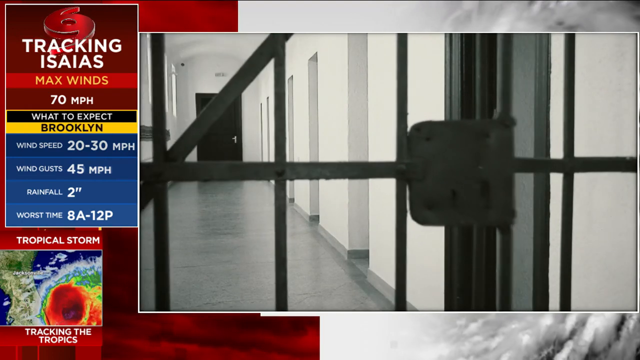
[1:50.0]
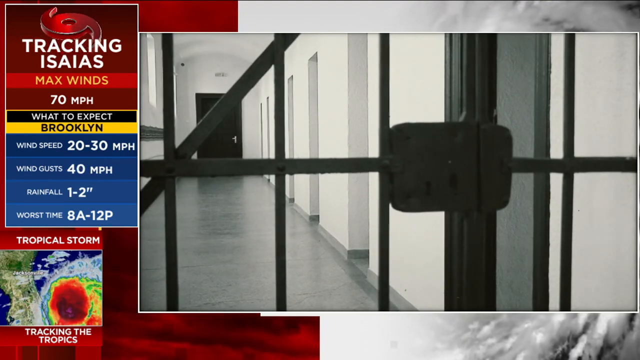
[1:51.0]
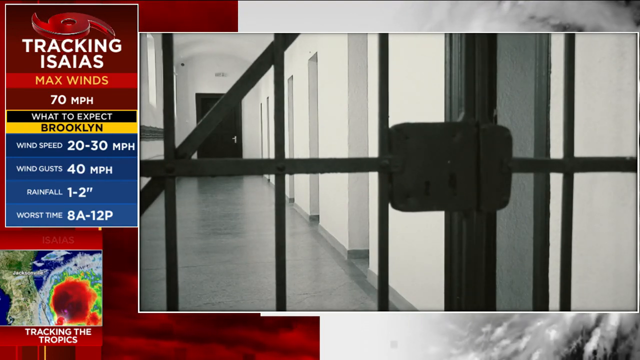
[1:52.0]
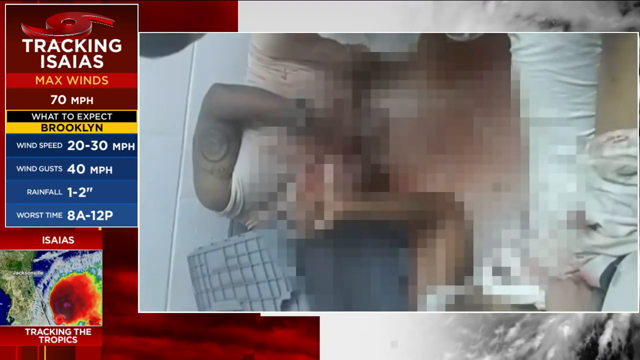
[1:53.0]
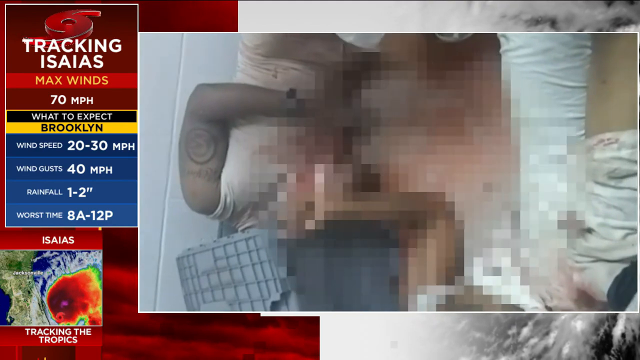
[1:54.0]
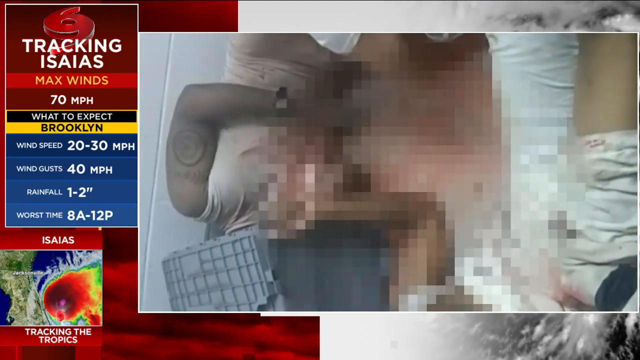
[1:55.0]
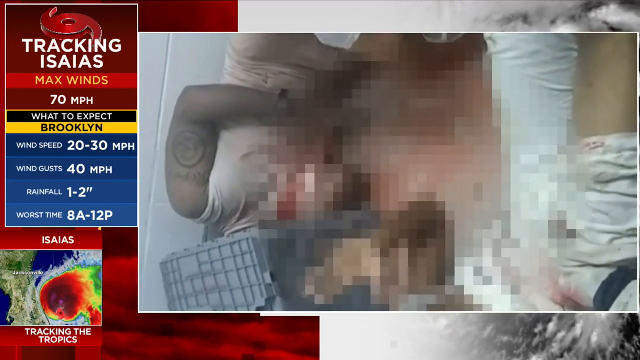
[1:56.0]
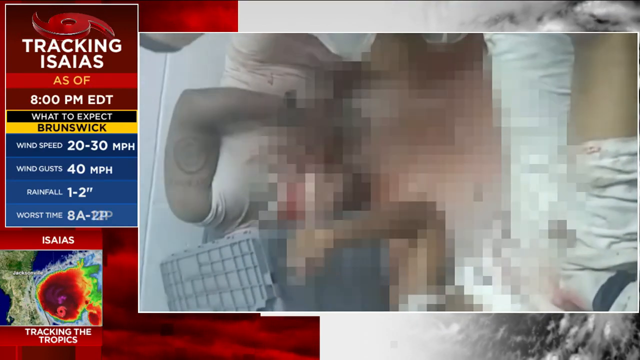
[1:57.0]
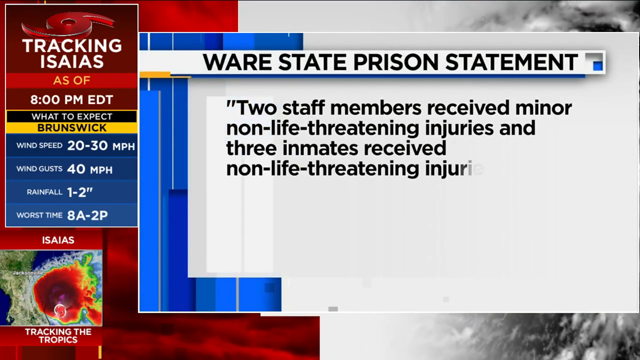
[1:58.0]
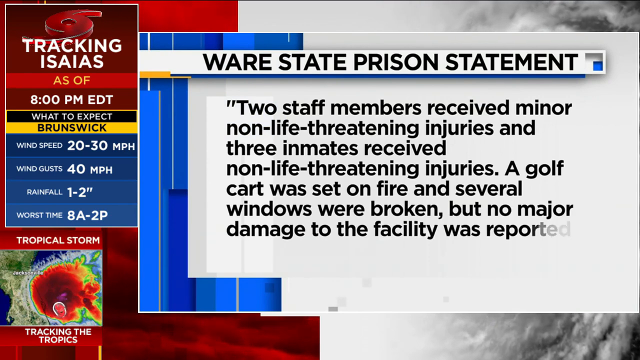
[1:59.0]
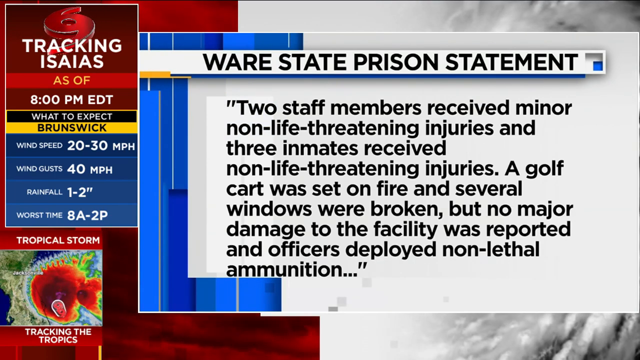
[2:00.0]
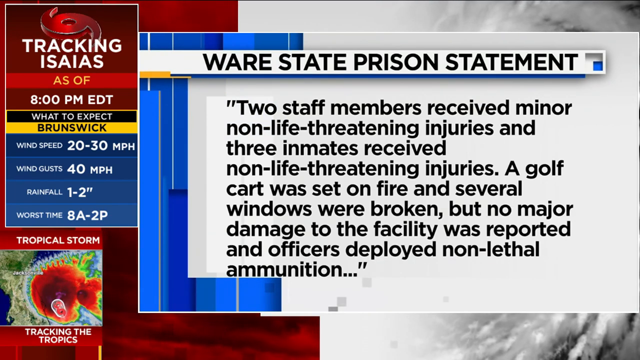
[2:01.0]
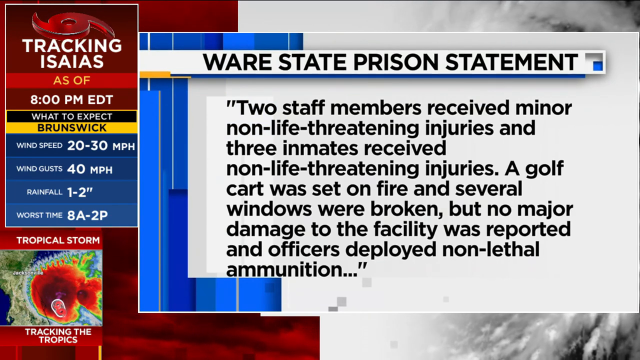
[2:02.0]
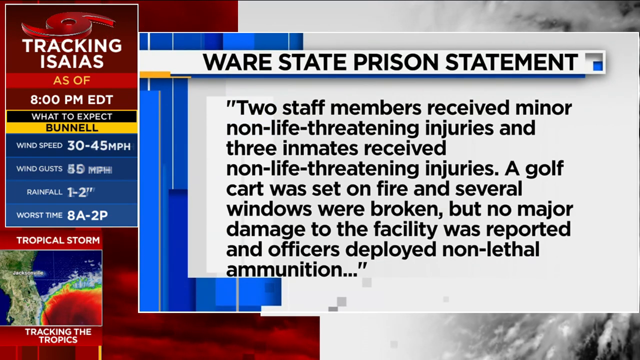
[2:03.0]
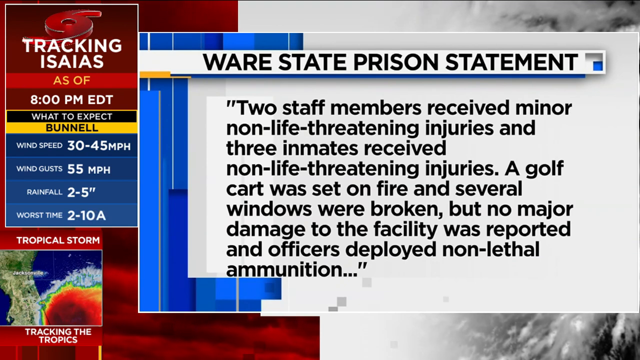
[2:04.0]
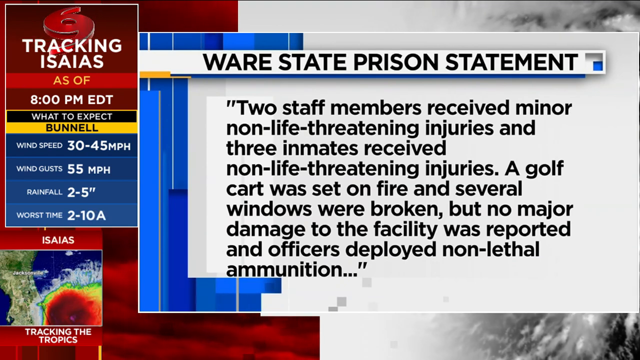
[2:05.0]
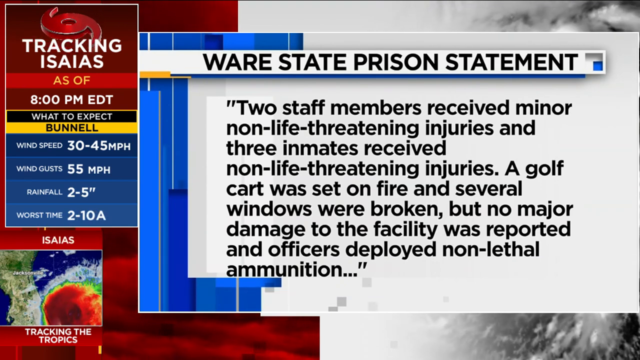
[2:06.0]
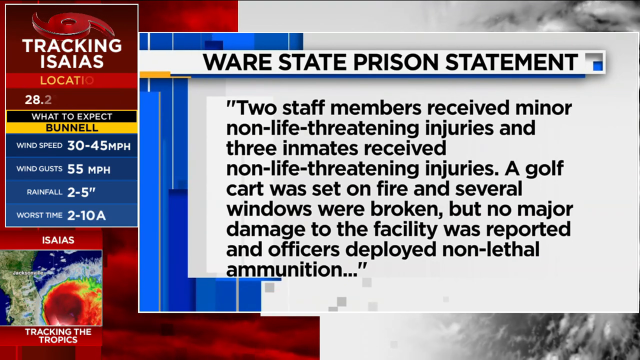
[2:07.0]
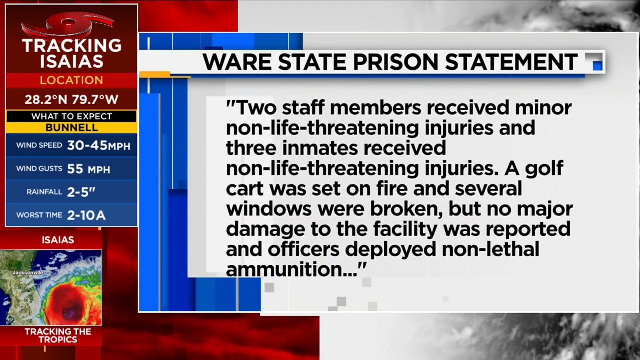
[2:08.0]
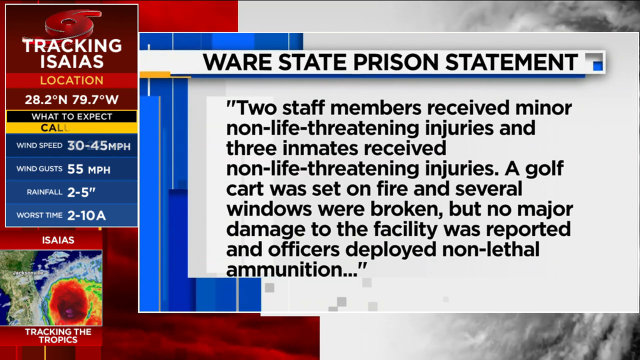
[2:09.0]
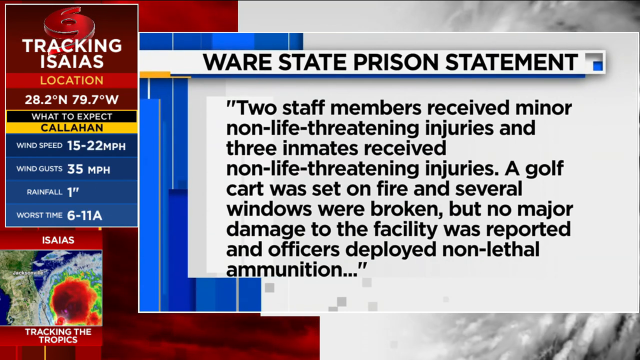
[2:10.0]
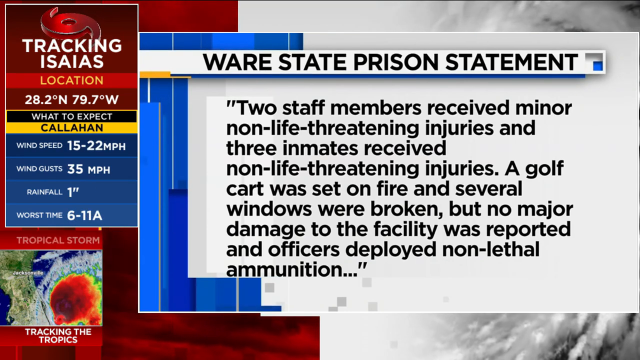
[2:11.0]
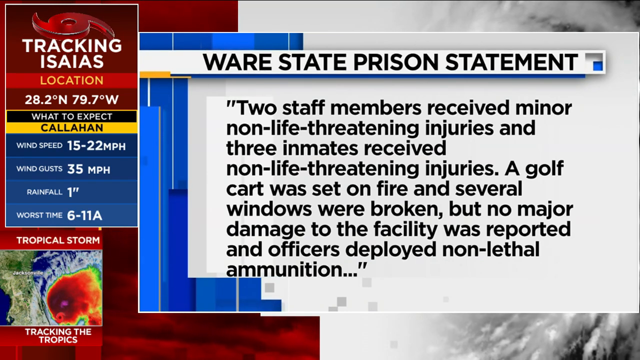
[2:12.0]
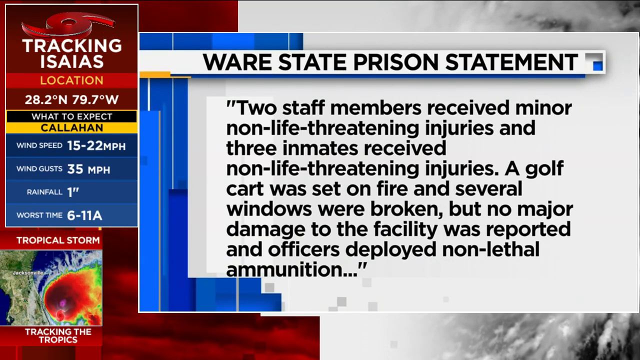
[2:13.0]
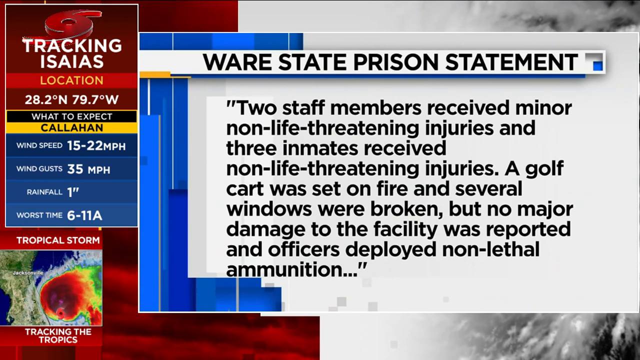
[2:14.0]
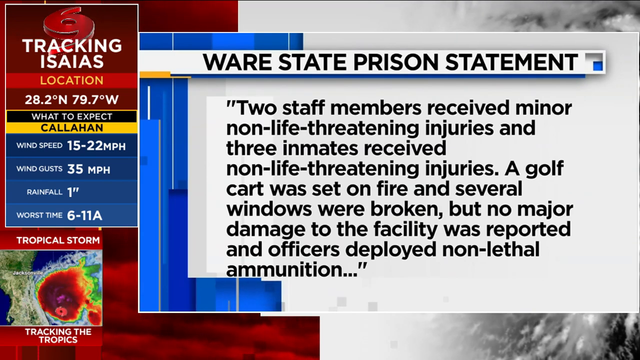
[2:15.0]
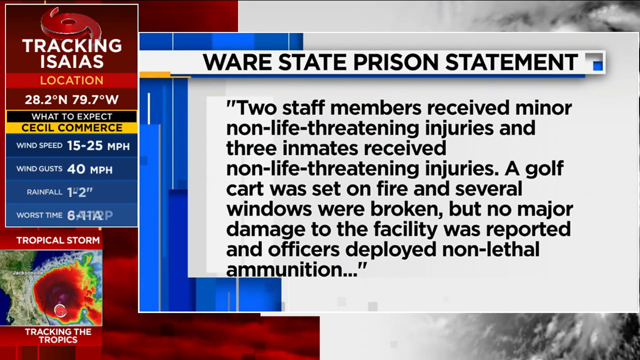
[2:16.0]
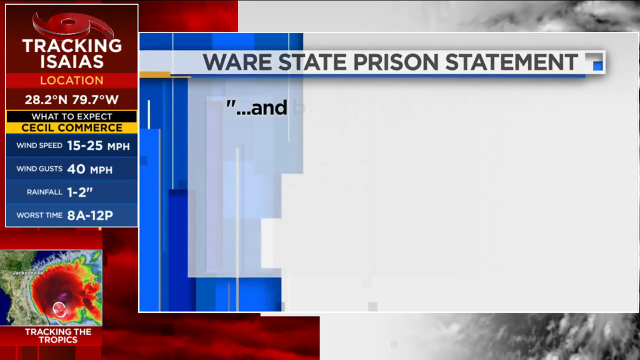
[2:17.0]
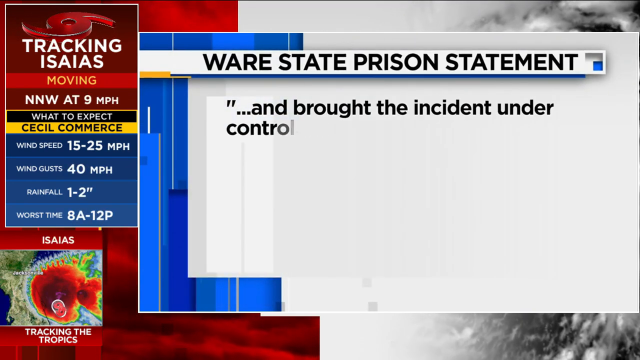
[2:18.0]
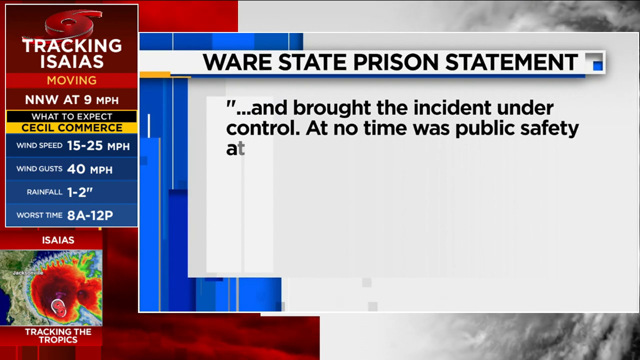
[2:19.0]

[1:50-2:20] The closed cell door is shown; it is black. Behind it are what look like either doorways or halls, and at the very end of the hallway is a black door with a silver handle. The video then goes to a person lying on the ground, crouching, holding his stomach with his hands. He is dark-skinned, wears what looks like a peach shirt, and has either a scar or a tattoo of the moon on his arm. A blue tote is on the ground, apparently a little smashed. Another man, blurred out, has his hand outreached and wears white pants; his hand keeps moving upward. Then a lot of lettering appears: a prison statement reading "two staff members received minor non-life-threatening injuries, three inmates received non-life-threatening injuries, a golf cart was set on fire, and several windows were broken, but no major damage to the facility was reported, and officers deployed non-lethal ammunition." It is written in black lettering on a white background with some blue around it, and stays on screen for a while with clouds or some weather image behind it. The text then continues, moving quickly.